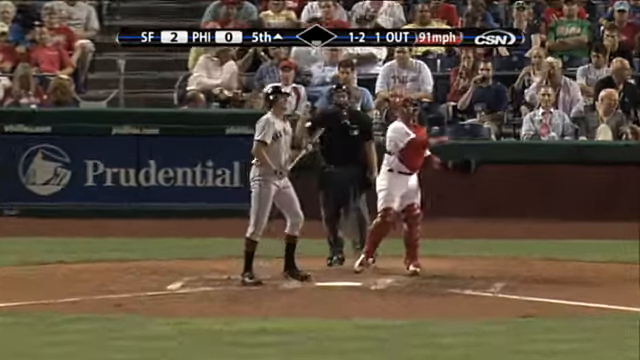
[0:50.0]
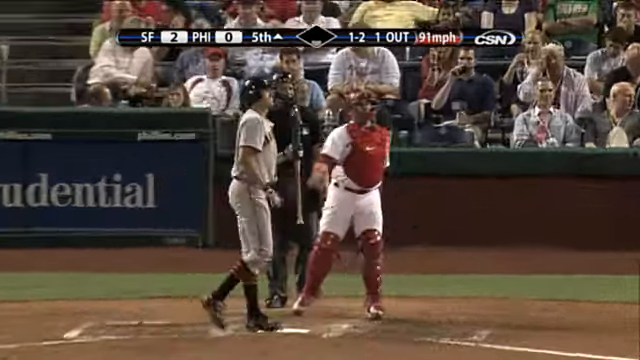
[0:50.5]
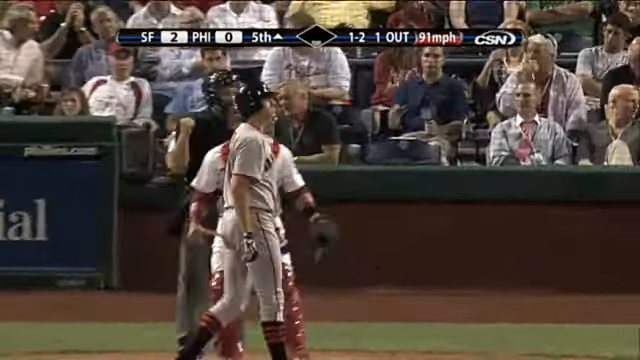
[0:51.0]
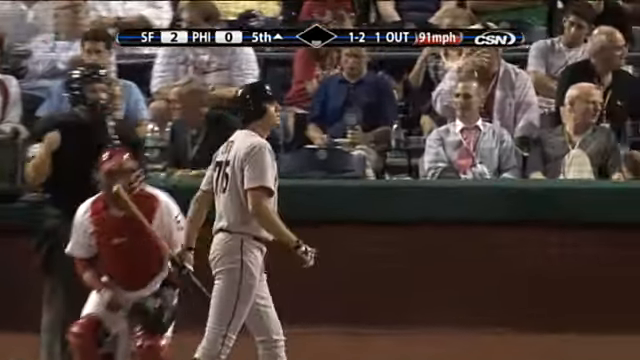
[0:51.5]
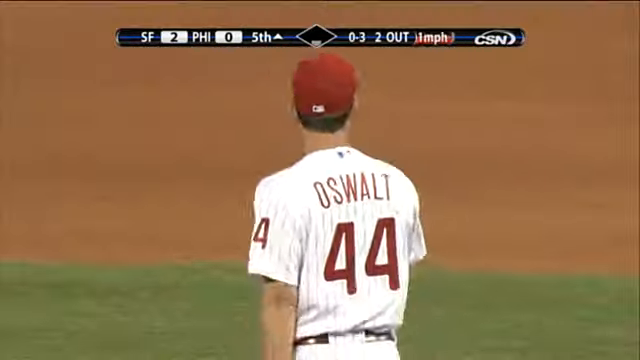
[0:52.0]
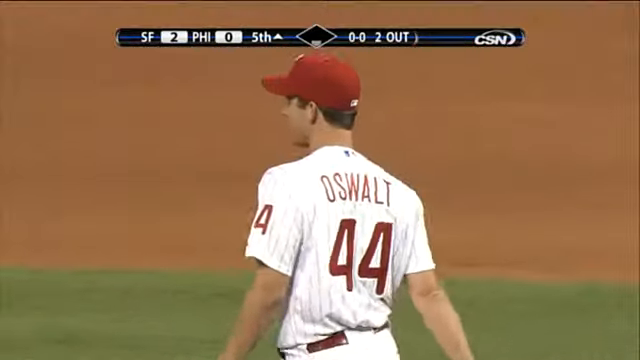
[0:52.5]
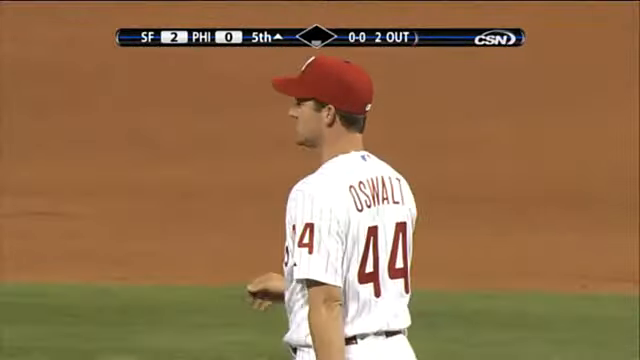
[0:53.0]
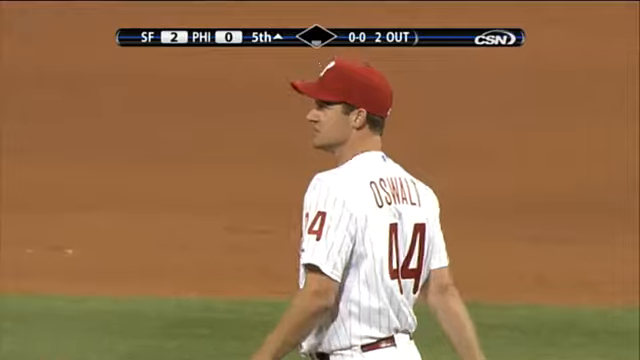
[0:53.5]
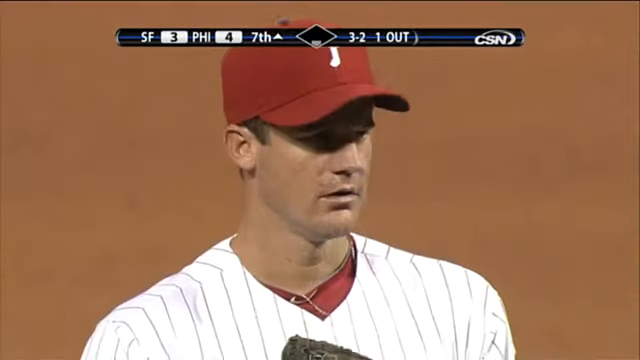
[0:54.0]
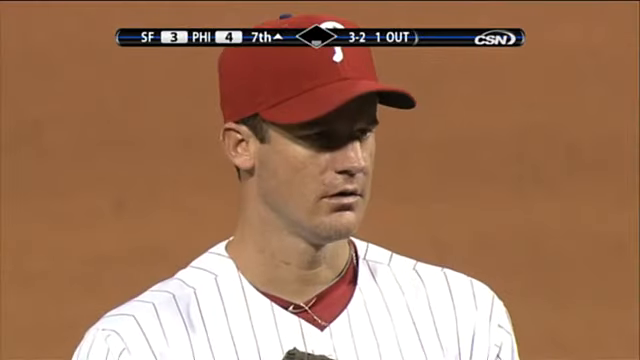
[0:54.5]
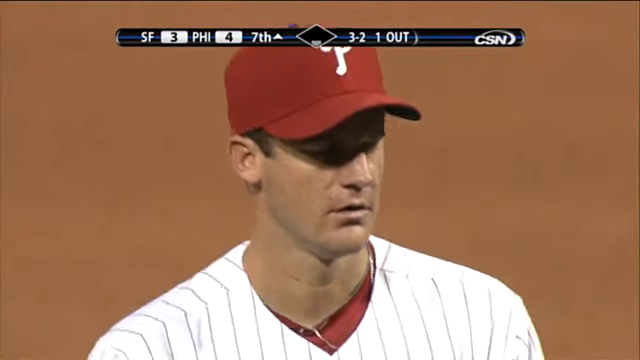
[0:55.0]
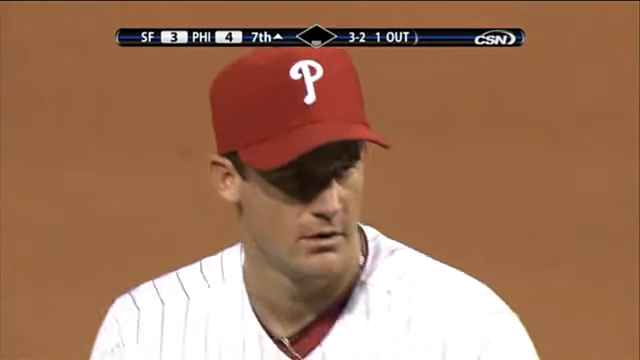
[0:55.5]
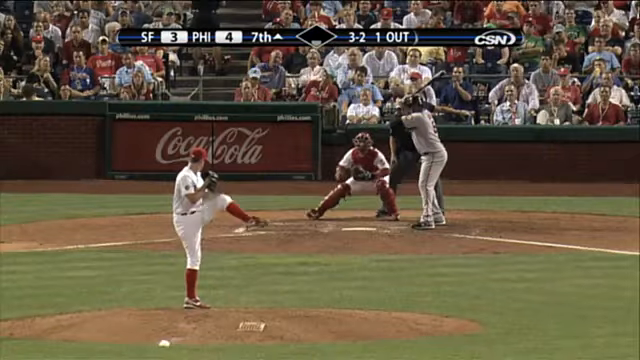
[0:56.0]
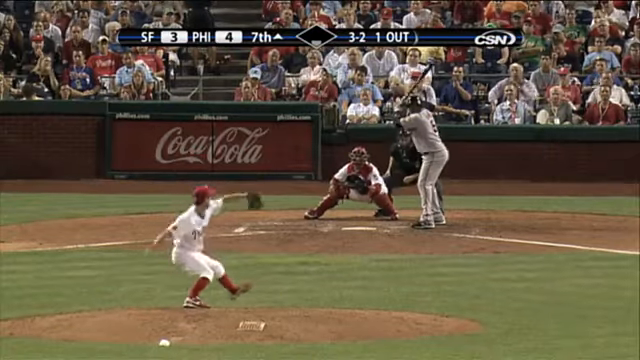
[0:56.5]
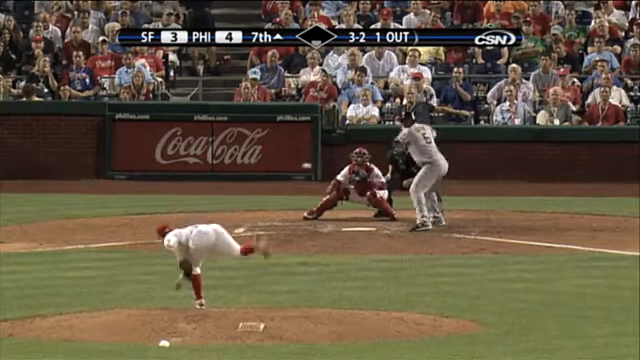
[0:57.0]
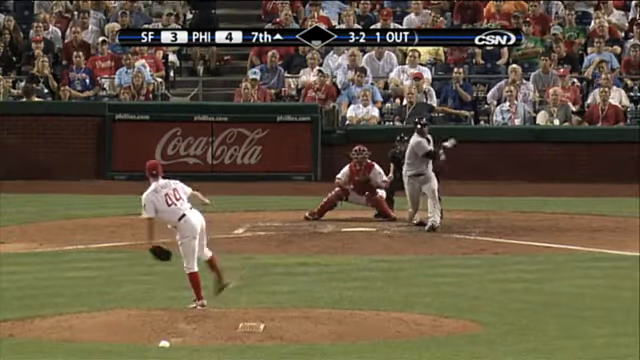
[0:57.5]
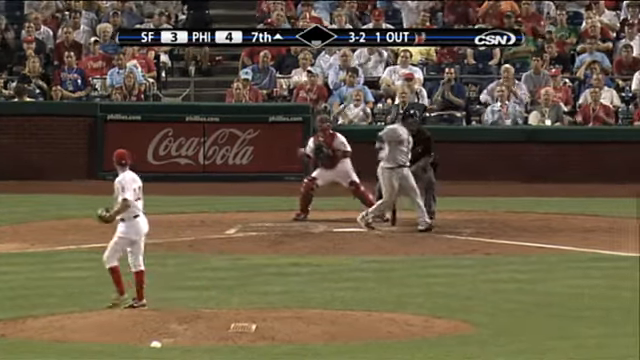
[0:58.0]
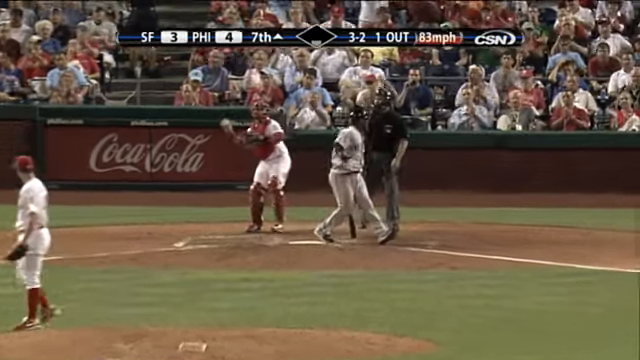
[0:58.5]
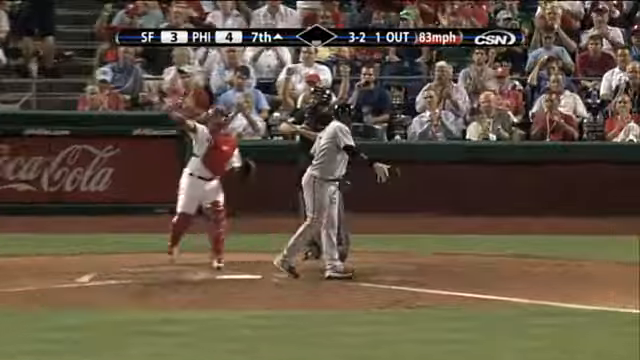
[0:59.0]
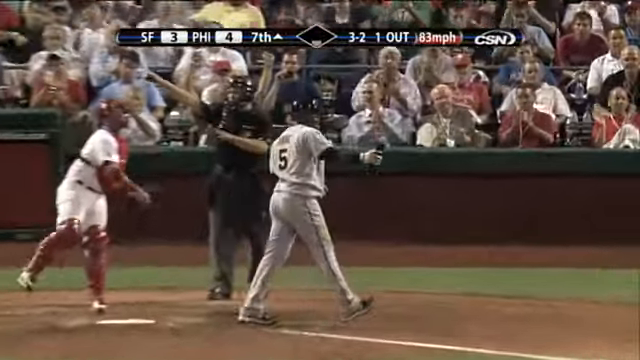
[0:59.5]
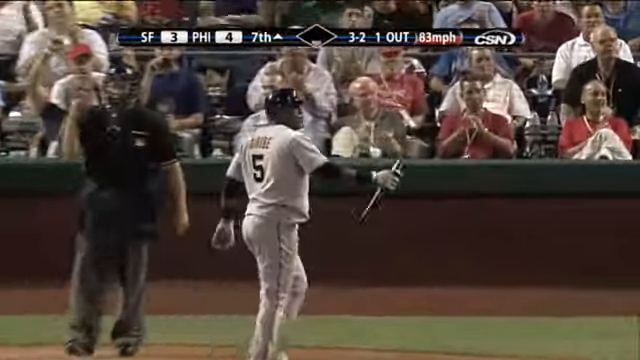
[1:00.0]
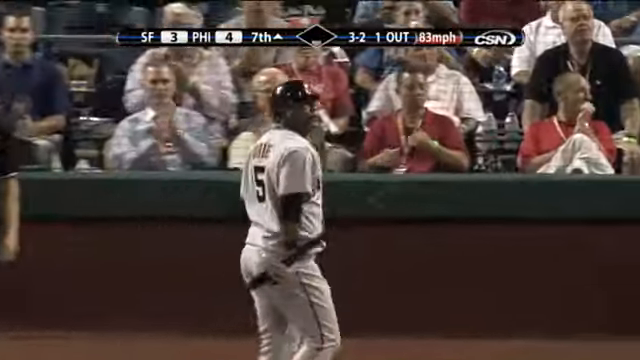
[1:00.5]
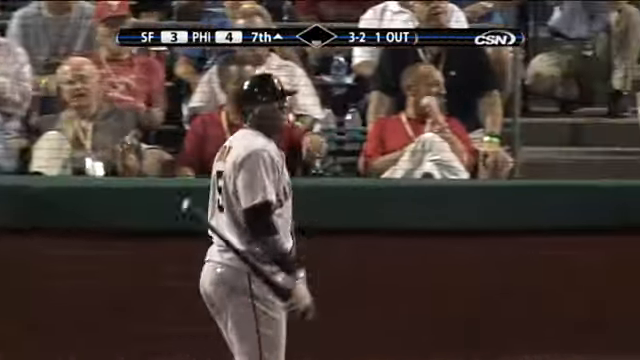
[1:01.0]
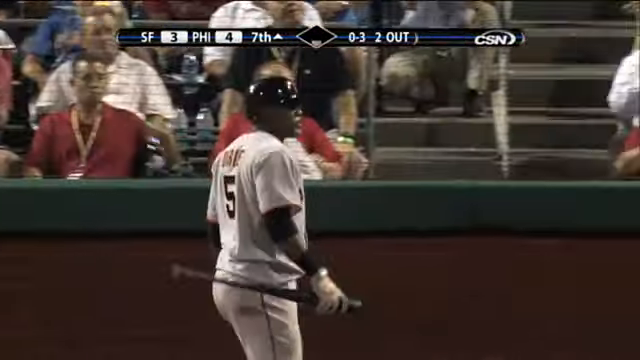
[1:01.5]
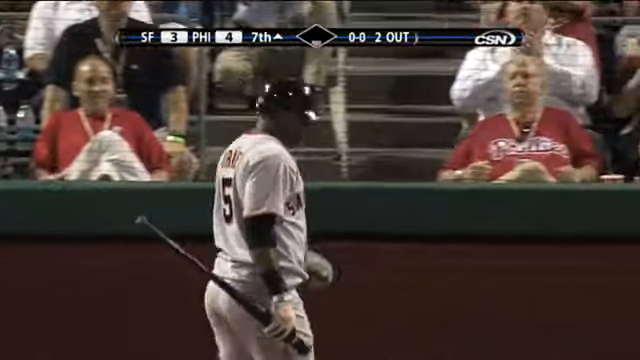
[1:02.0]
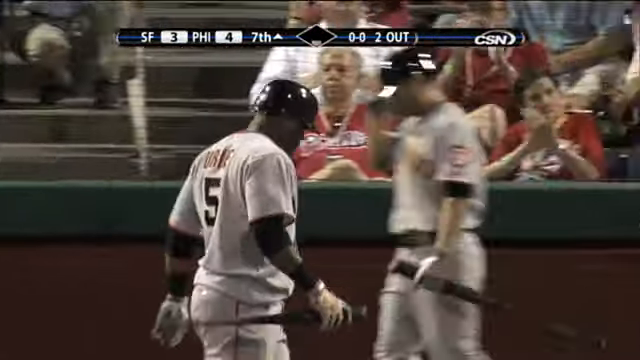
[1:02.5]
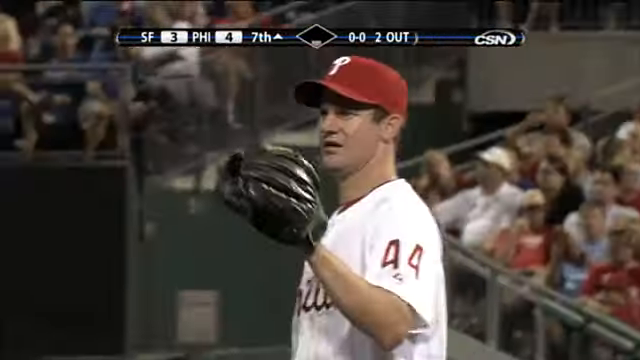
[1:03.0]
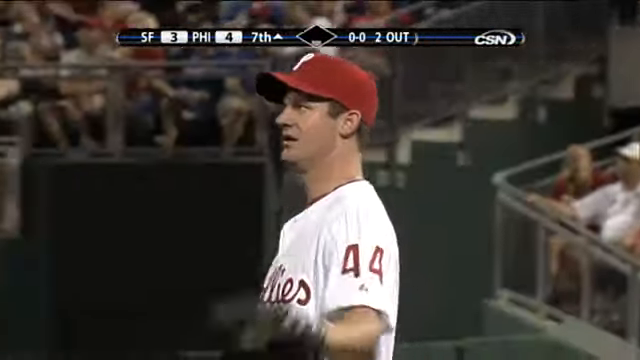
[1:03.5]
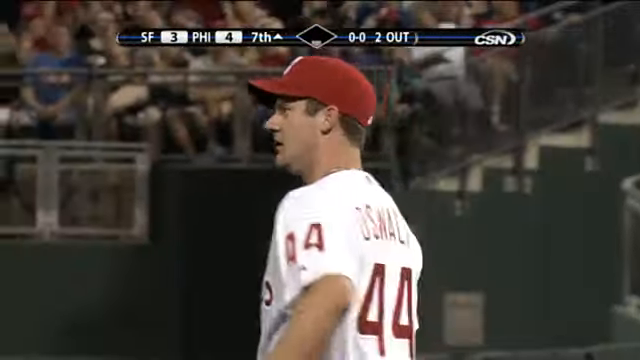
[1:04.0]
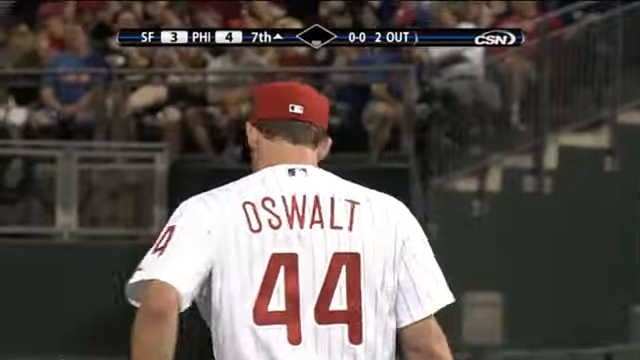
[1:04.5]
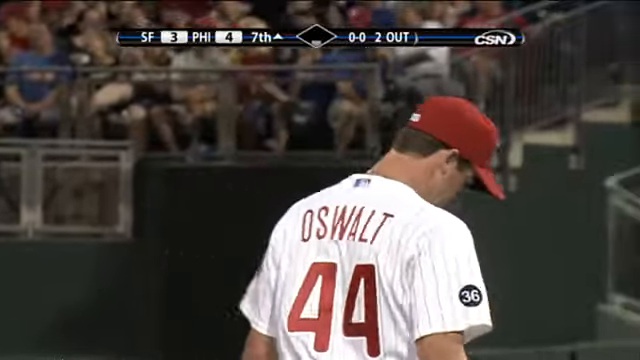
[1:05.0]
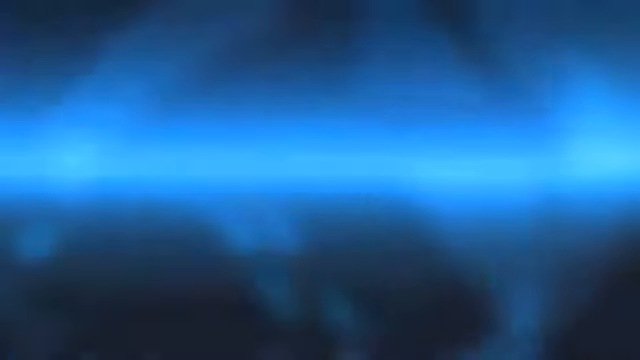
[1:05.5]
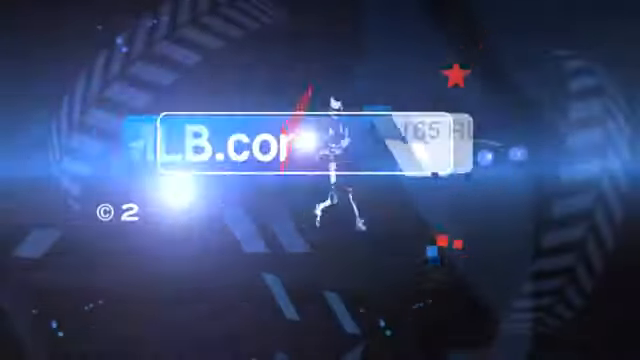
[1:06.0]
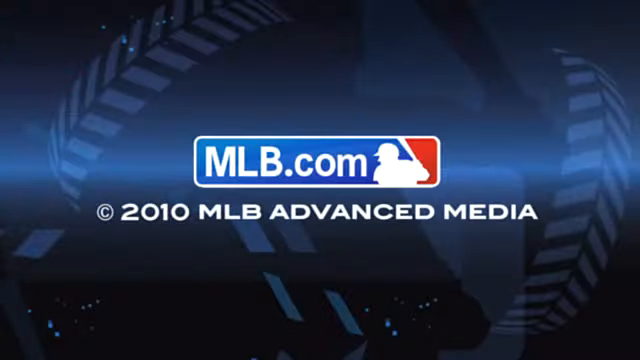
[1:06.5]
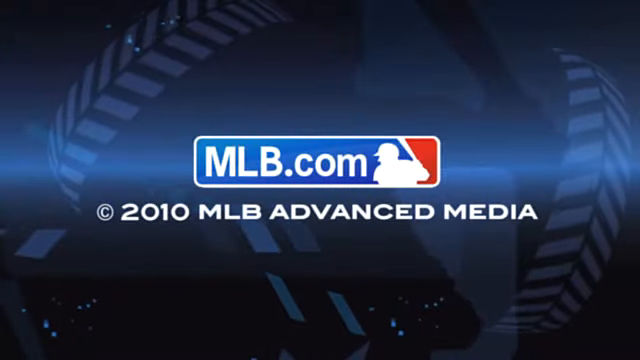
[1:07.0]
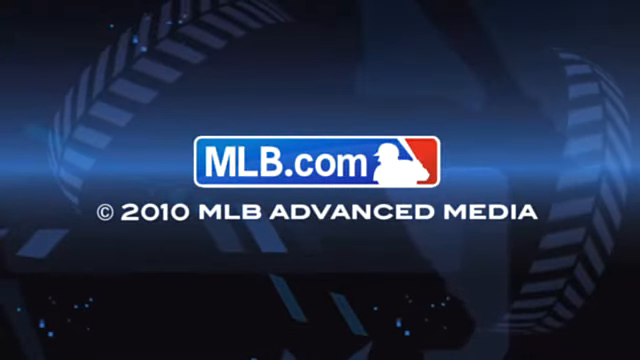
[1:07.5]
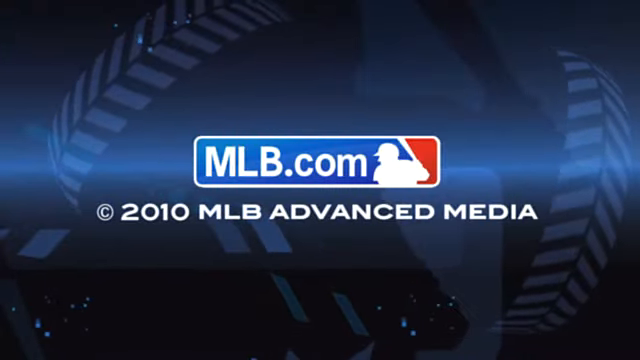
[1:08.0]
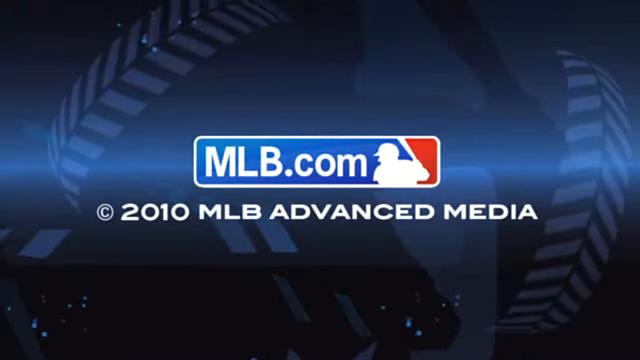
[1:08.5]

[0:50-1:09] A struck-out batter is kind of walking away and looks at the monitor, probably to take in a replay. The view then shows Oswalt from the back on the pitching mound. He wears a red cap with a small MLB emblem logo, and his uniform has 44 on both sleeves and red pinstripes going up and down. His name is slightly curved across his back in big red writing, with a big red 44 underneath. In the next pitch sequence, the batter misses again, kind of spinning as he swings; he has so much momentum from swinging so hard that he uses his bat as a crutch so he doesn't fall back. This is Juan Uribe, number four. He kind of swings the bat and jogs with it as he goes off the field, looking down for a second, and the next batter can be seen coming up. Oswalt asks for the ball back, gets it and pulls on his pant legs for a moment. The video then goes to an animated baseball-stitching background with "MLB.com" in red, white and blue and a white silhouette of a baseball player. Underneath, in white all-caps letters, is a copyright notice reading "2010 MLB ADVANCED MEDIA".